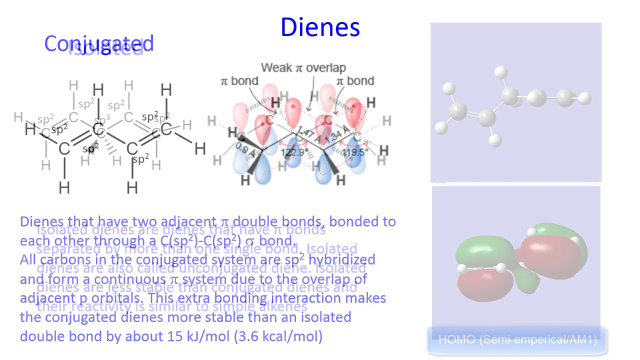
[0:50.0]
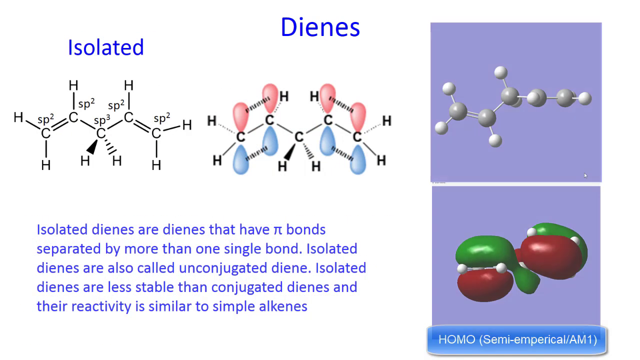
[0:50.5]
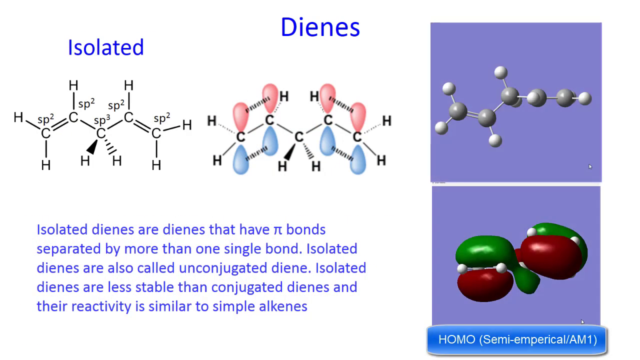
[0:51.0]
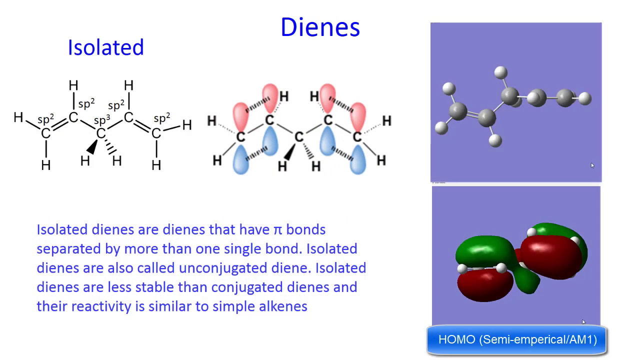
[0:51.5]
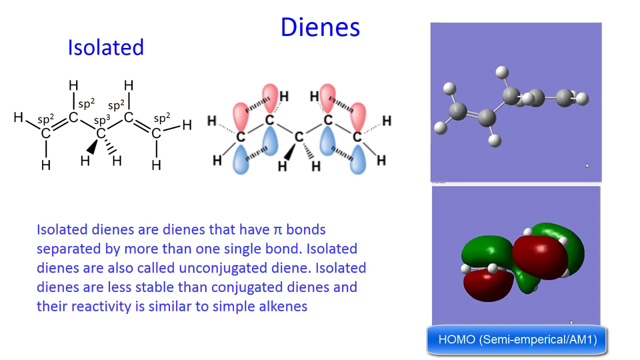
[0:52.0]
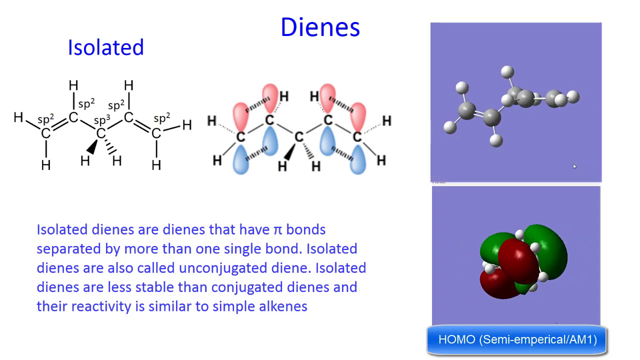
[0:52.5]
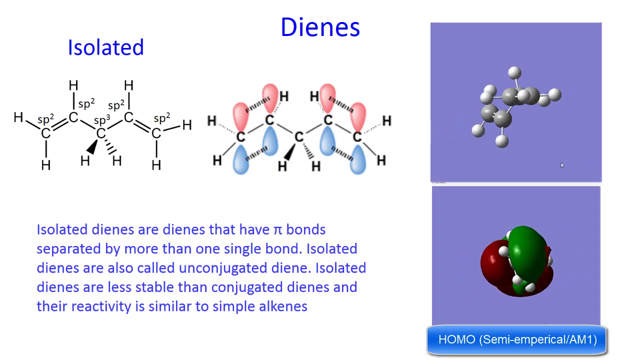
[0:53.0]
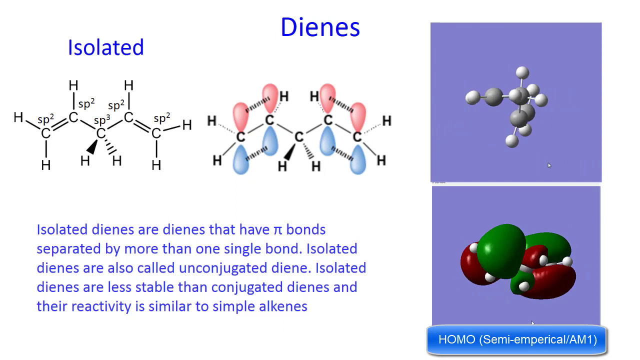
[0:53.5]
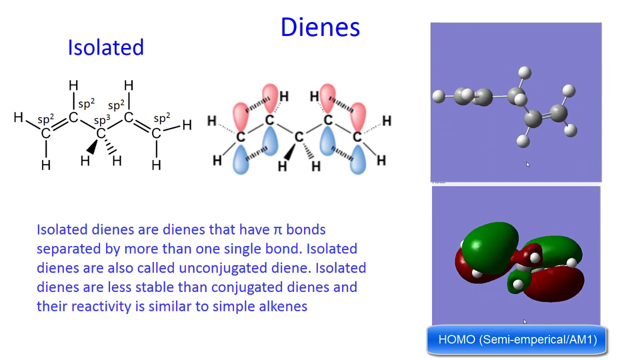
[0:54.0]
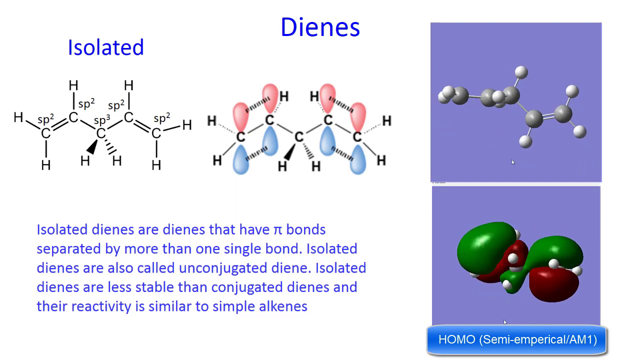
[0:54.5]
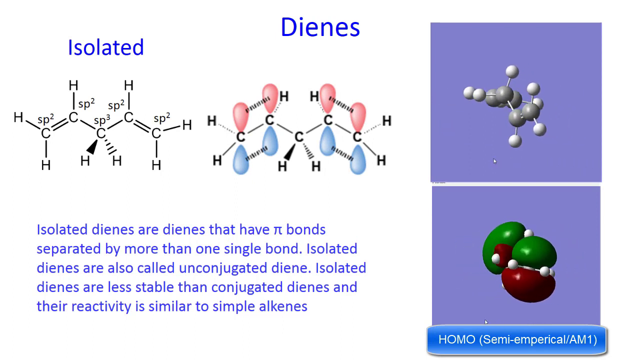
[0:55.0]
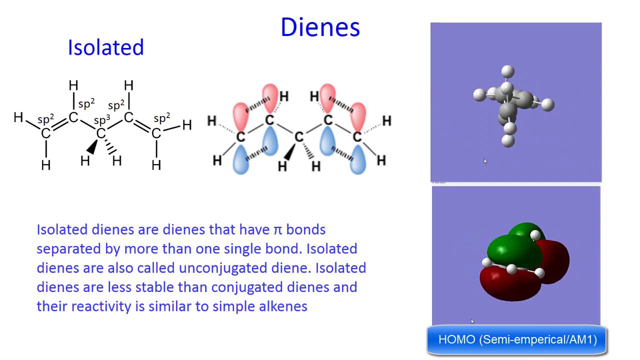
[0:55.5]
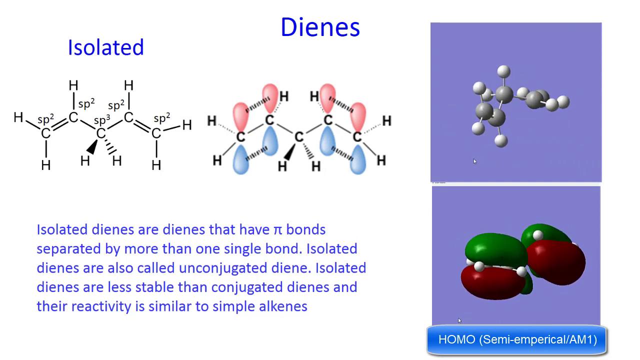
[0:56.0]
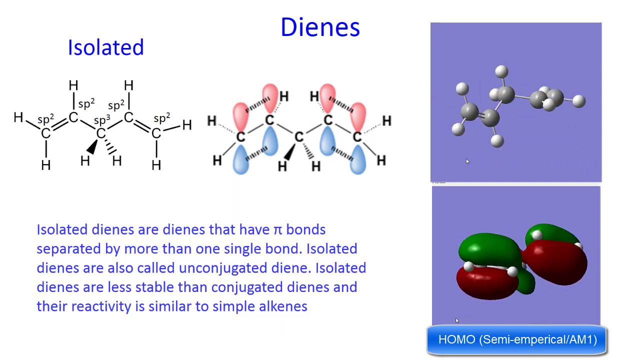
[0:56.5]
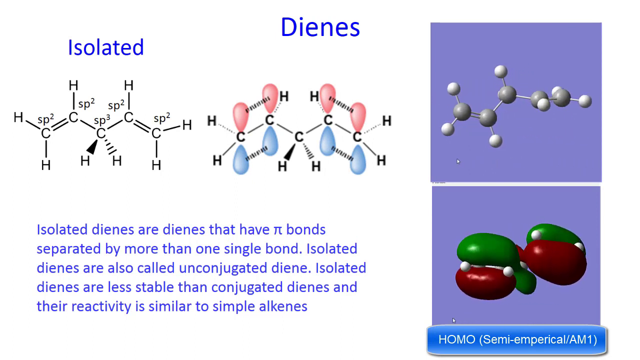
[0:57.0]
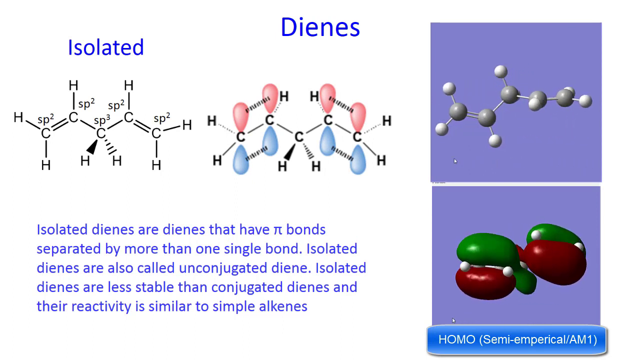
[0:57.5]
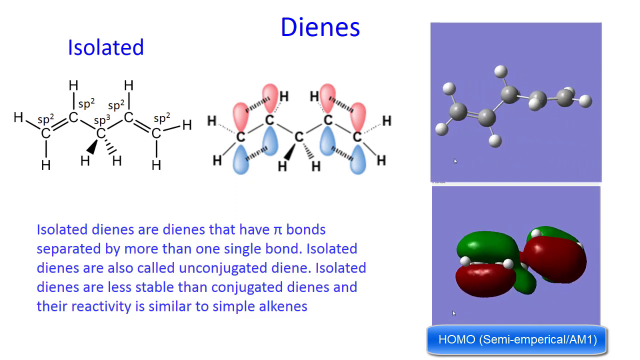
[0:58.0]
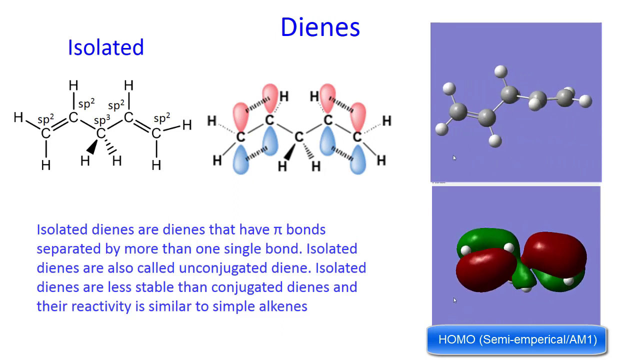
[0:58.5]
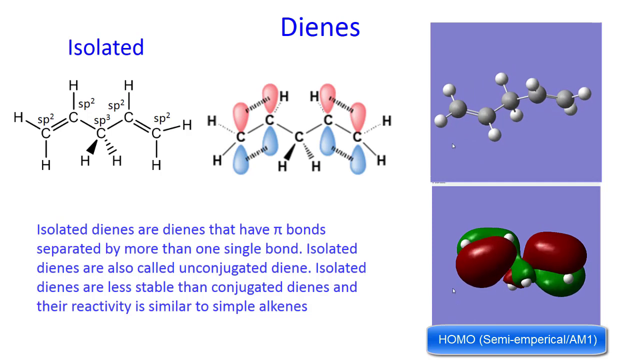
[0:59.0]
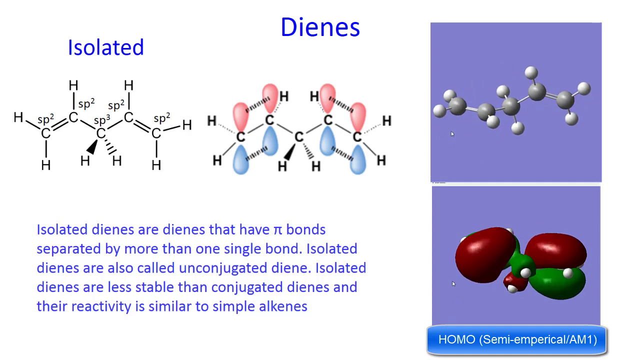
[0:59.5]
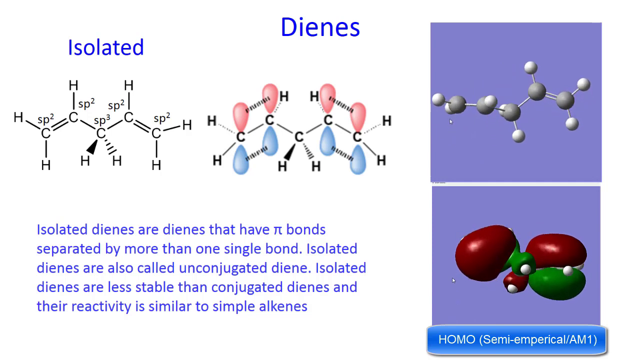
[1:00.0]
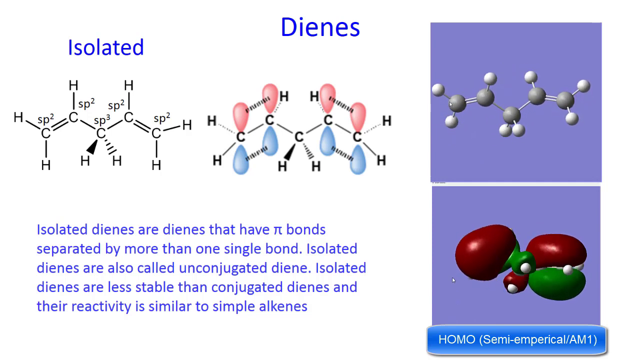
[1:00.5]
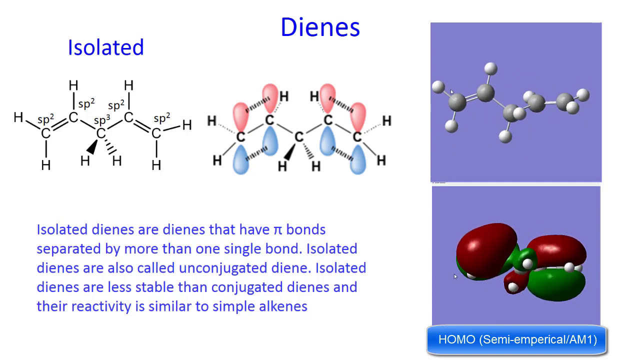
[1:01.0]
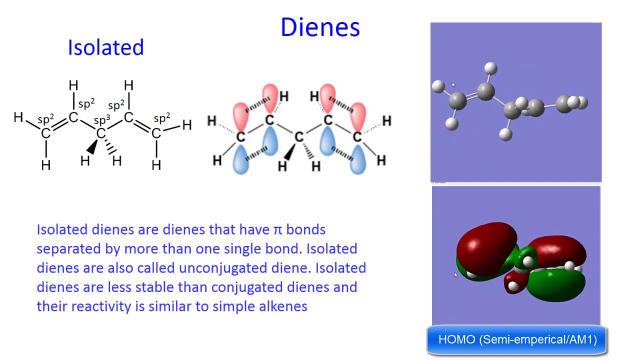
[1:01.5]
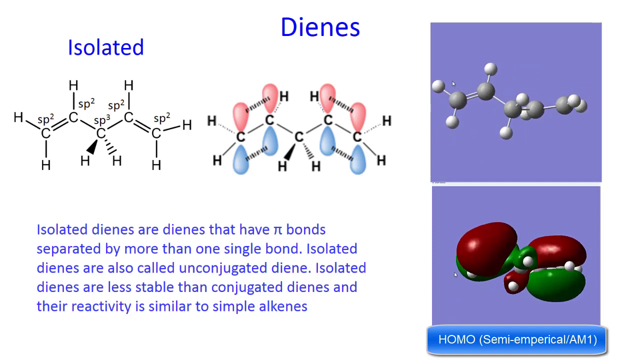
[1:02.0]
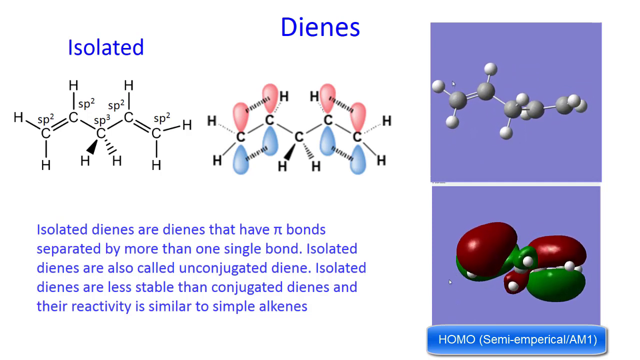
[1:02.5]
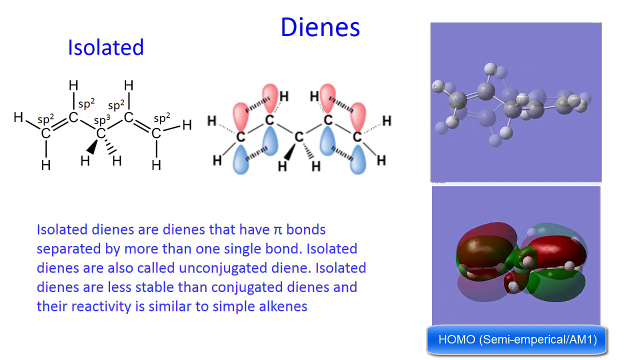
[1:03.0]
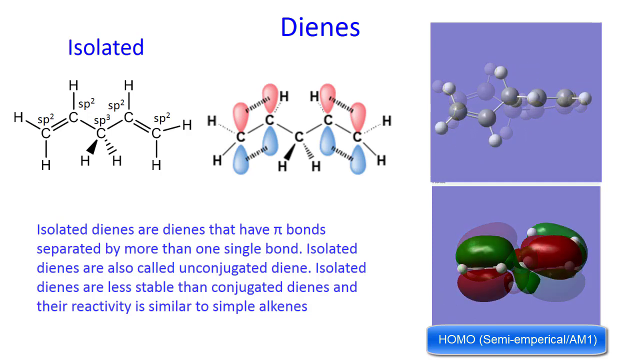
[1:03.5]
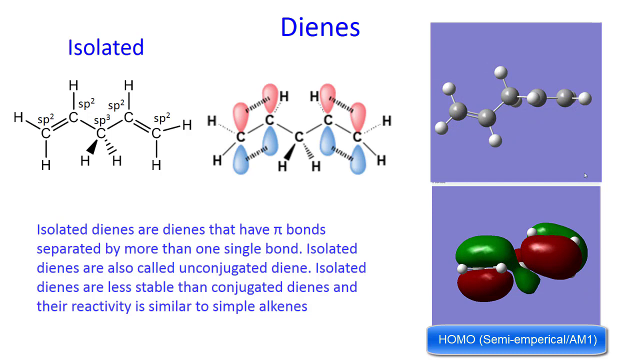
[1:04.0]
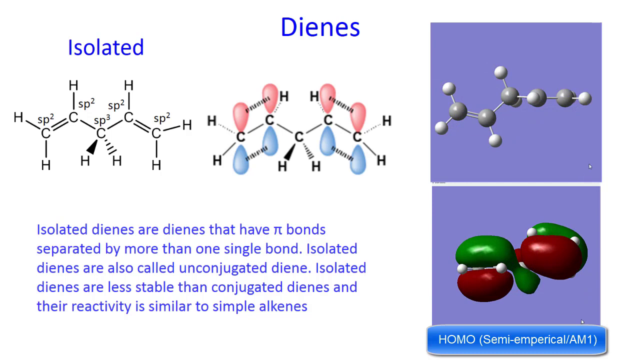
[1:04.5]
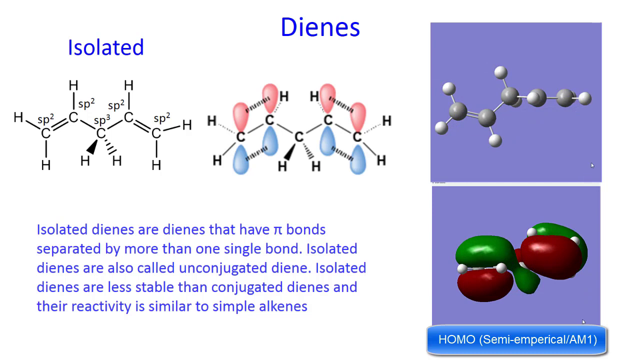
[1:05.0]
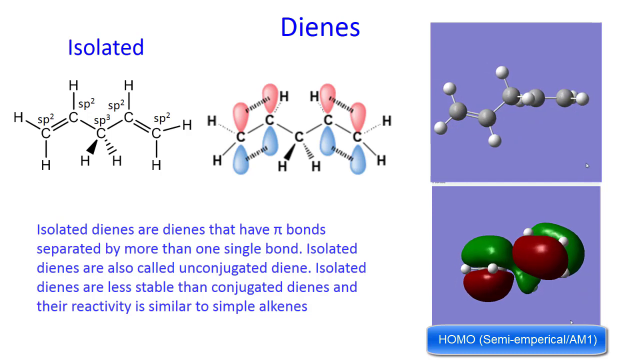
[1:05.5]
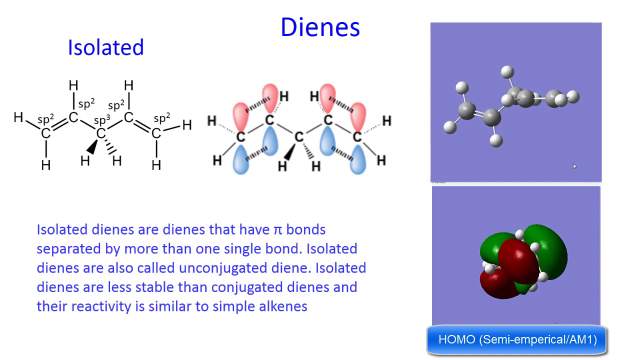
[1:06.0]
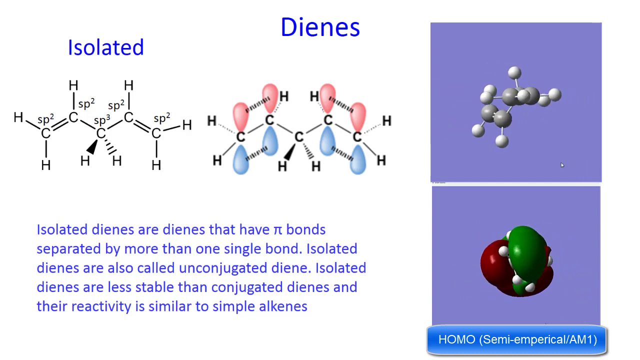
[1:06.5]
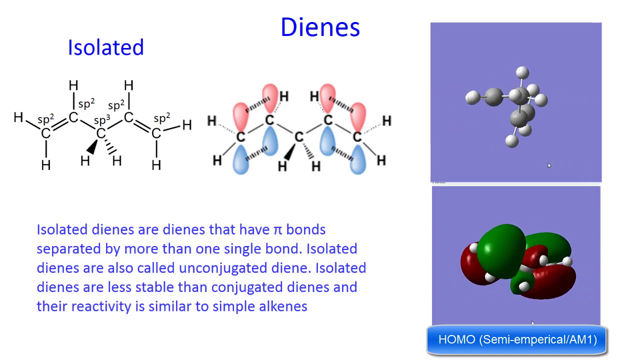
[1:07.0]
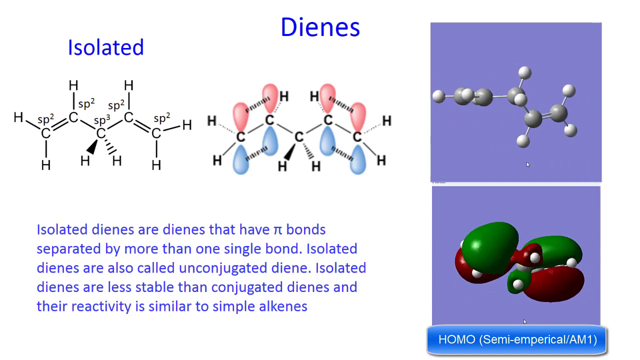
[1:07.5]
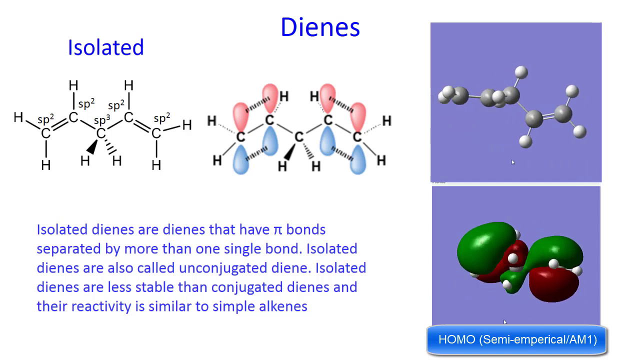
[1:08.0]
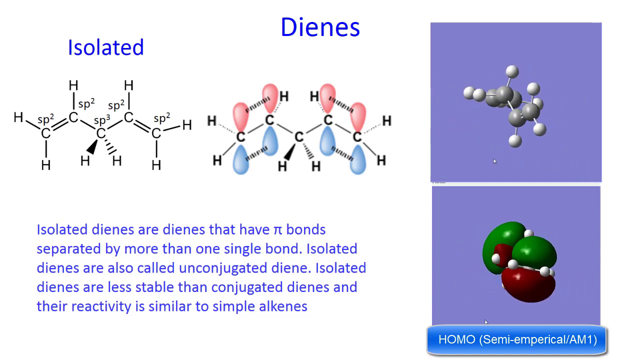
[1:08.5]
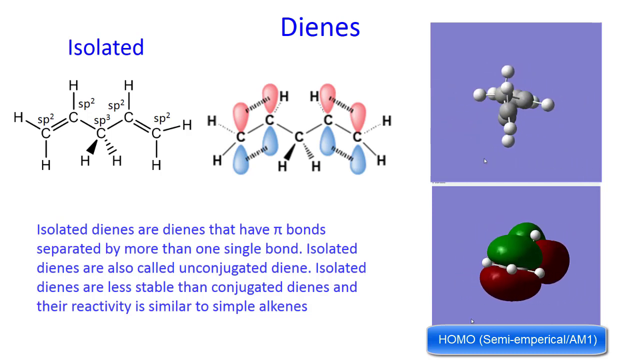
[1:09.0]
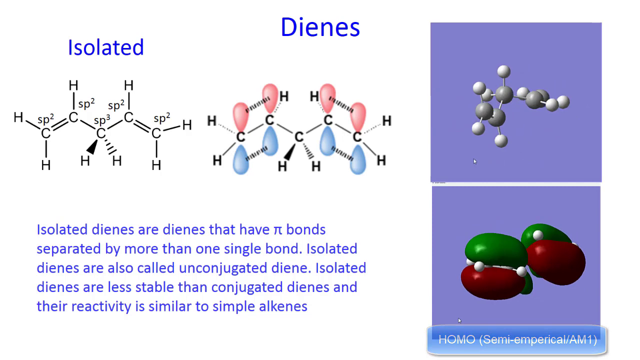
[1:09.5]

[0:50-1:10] The conjugated dienes text remains on screen, describing two adjacent π-double bonds bonded through a carbon sp2-carbon sp2 sigma bond, all carbons in the conjugated system being sp2-hybridized and forming a continuous π-system, and a stability gain of about 15 kJ per mole, 3.6 kcal per mole, over an isolated double bond. The words "Thank you for watching" appear. A section on isolated dienes follows, stating that "isolated dienes are also called unconjugated dienes" and that they are less stable than conjugated dienes. Representations of the molecules are shown, with nothing else.